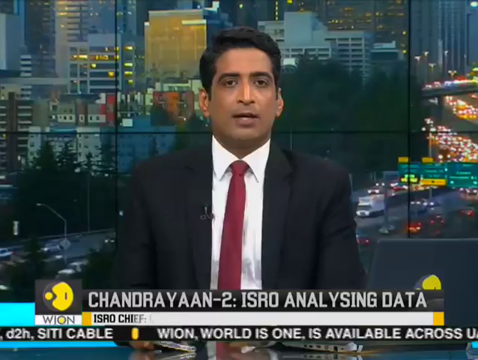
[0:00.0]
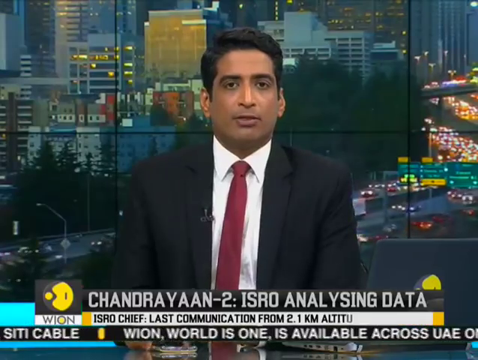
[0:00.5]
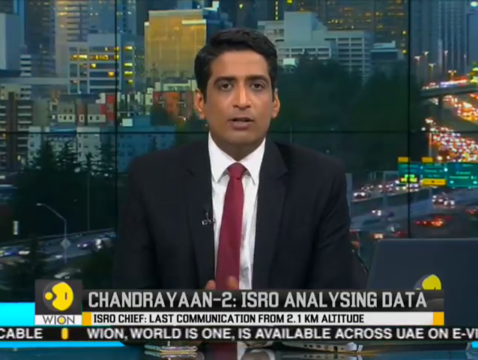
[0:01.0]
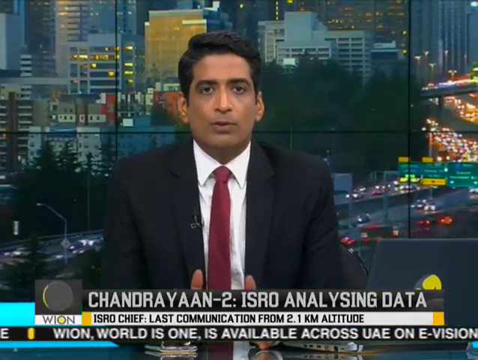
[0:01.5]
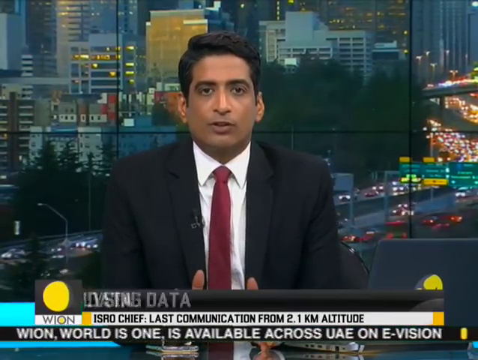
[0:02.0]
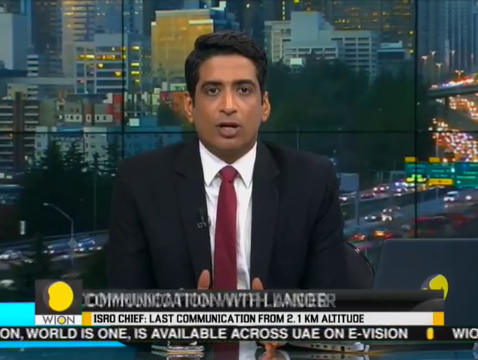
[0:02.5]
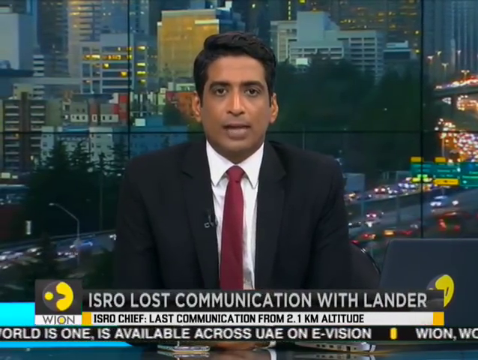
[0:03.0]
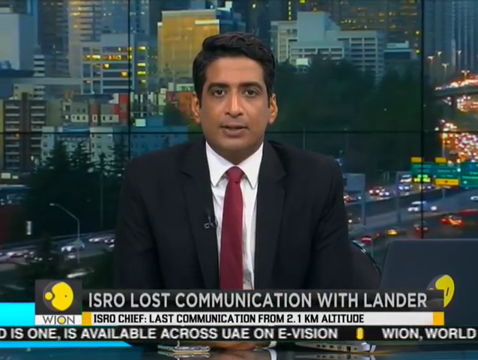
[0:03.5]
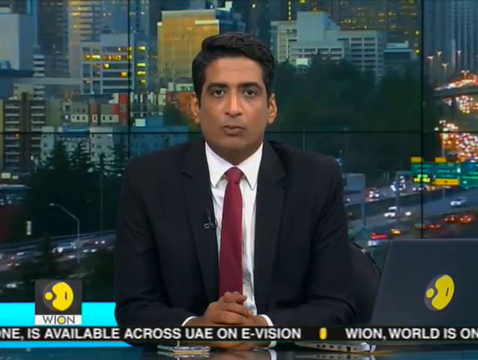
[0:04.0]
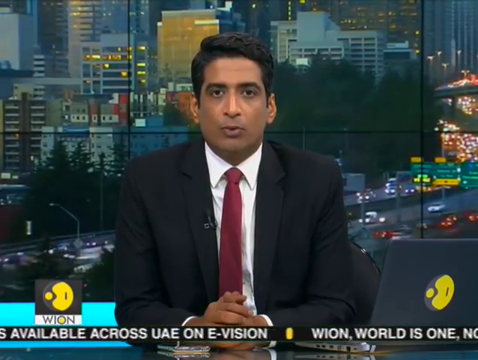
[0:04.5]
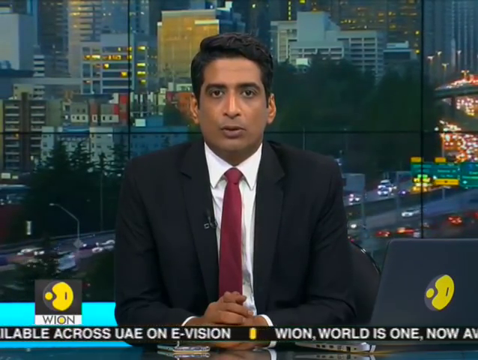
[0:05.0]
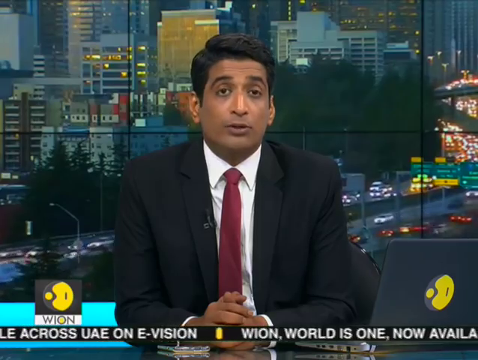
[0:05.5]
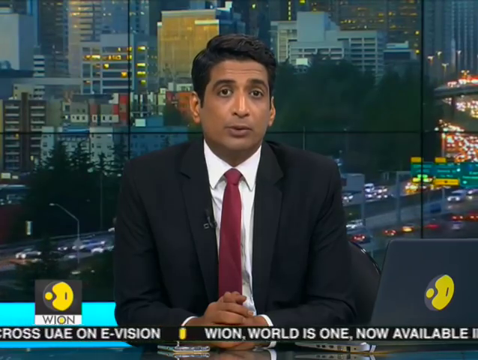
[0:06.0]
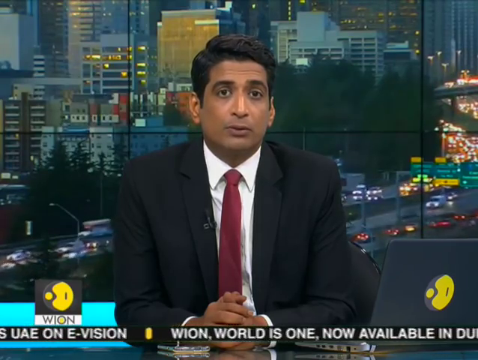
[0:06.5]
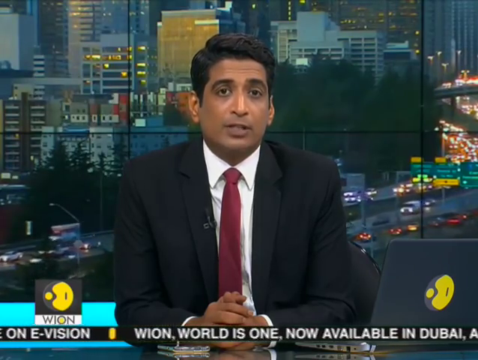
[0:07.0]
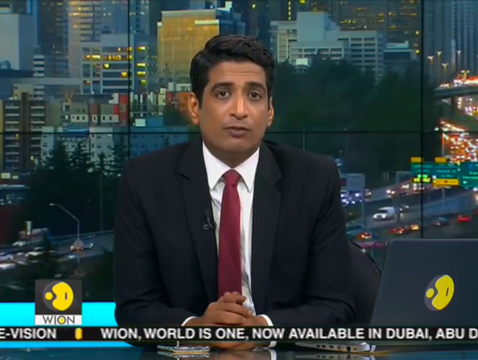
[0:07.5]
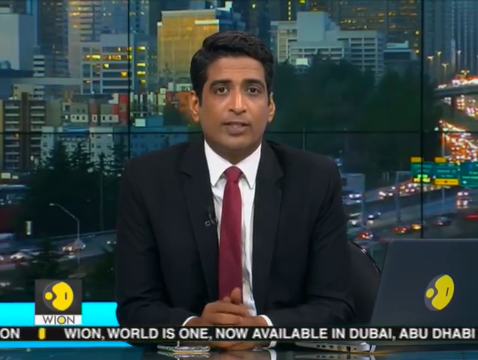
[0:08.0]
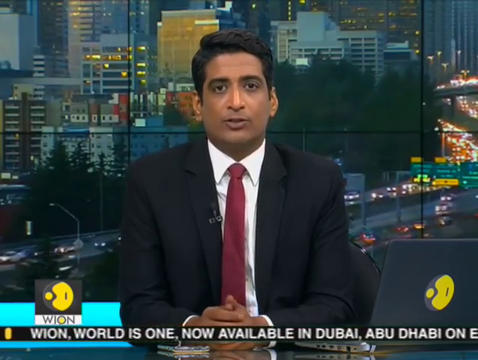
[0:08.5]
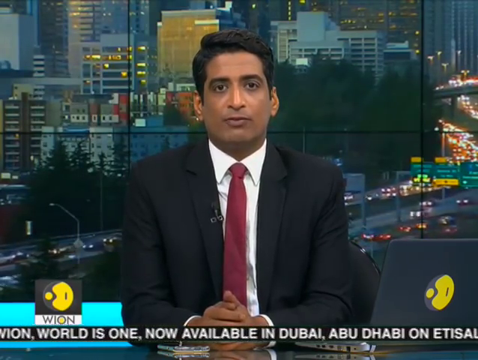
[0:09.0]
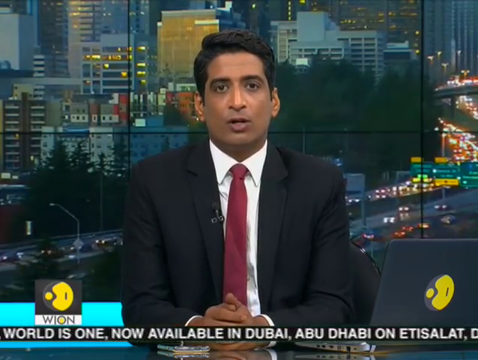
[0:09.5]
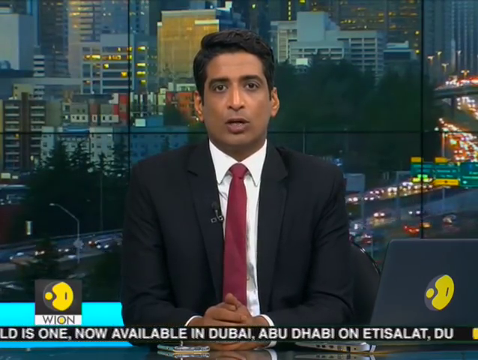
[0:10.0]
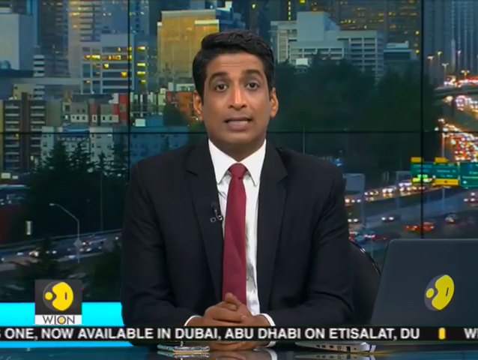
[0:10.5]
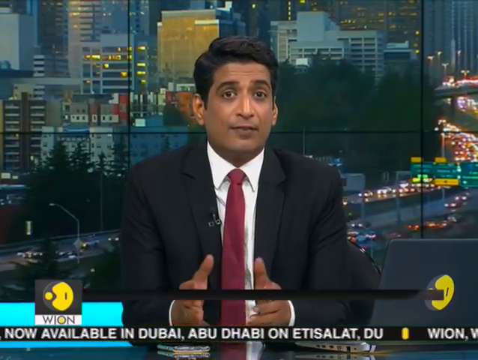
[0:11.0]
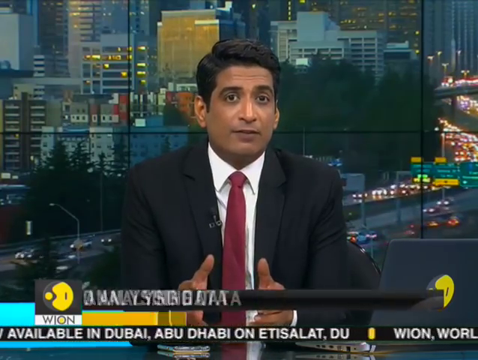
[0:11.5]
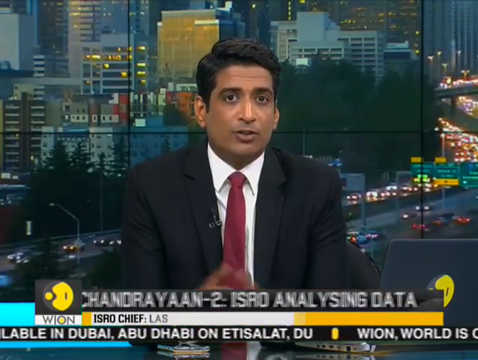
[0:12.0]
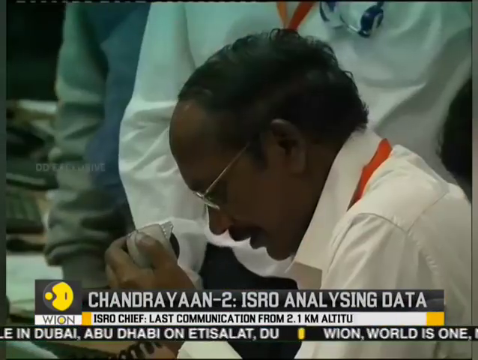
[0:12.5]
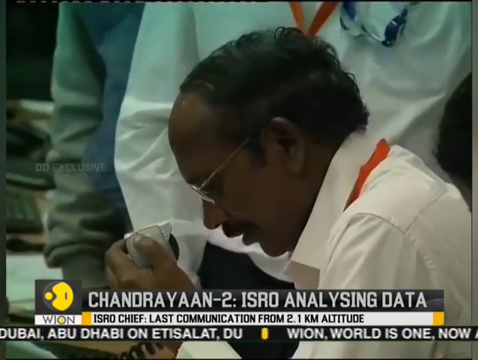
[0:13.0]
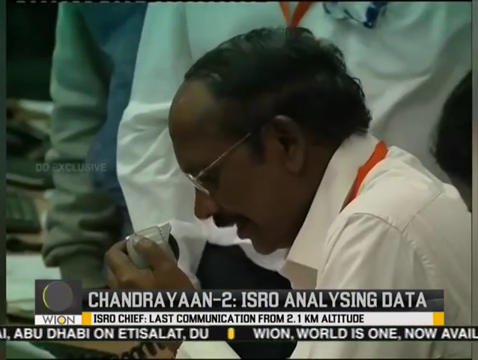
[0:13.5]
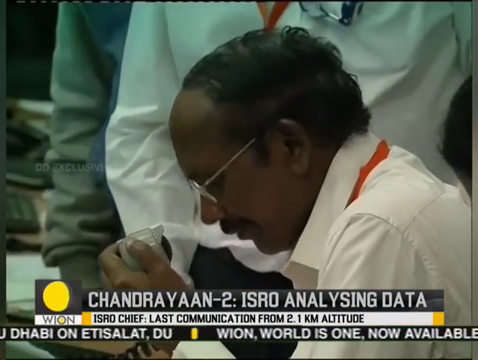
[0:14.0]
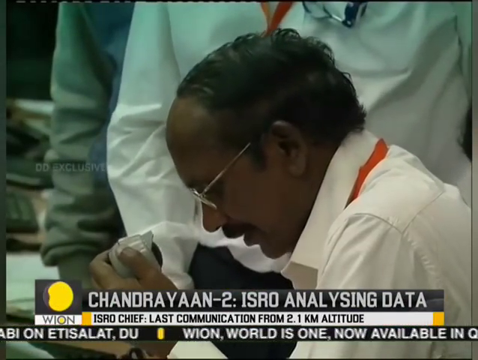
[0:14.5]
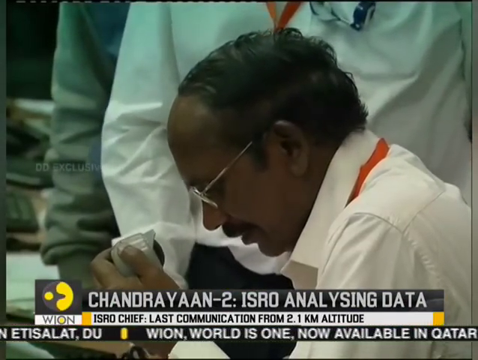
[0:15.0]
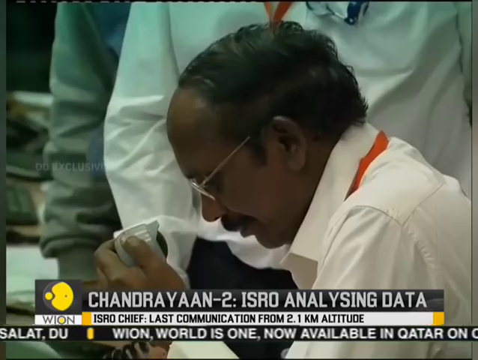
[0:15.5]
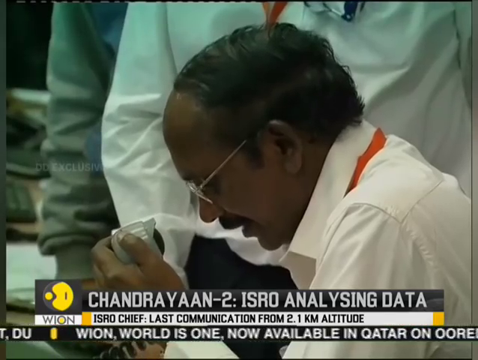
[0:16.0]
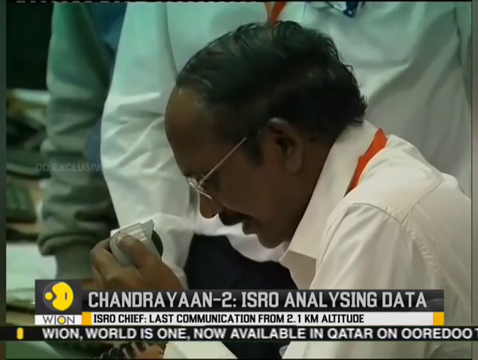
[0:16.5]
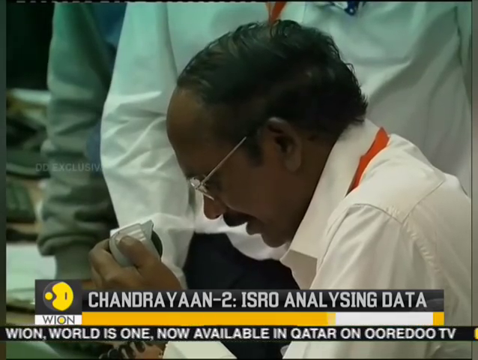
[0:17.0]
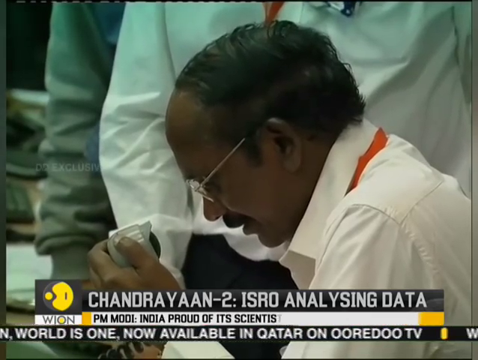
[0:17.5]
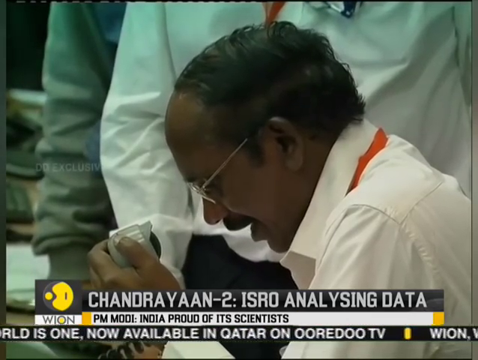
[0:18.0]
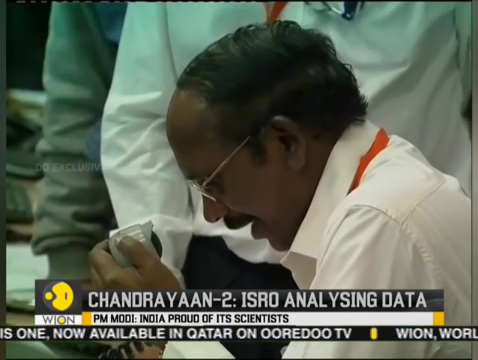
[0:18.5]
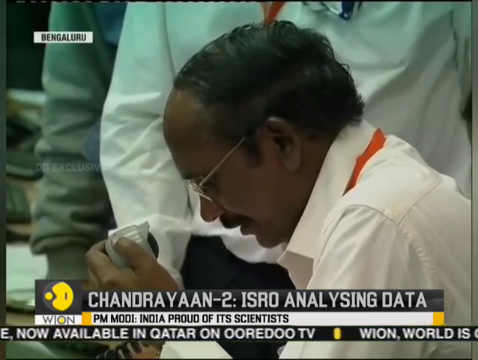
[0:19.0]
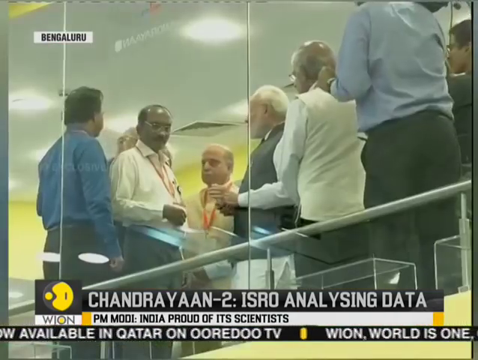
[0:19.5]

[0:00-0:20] A WION (World is One) News newscast reports on Chandrayaan, apparently a moon lander that India launched and that appears to have crashed. On-screen text reads "ISRO analyzing data", "Chief of ISRO says the last communication from 2.1 kilometers altitude" and "Prime Minister Modi says that India is proud of its scientists", followed by "ISRO lost communication with Lander". The scene behind a man appears to be in California or America, judging by the road signs. An Indian man in a white dress shirt with an orange lanyard around his neck talks into what looks like a microphone. Next, a group of people is shown inside a glass building, filmed from outside the building.